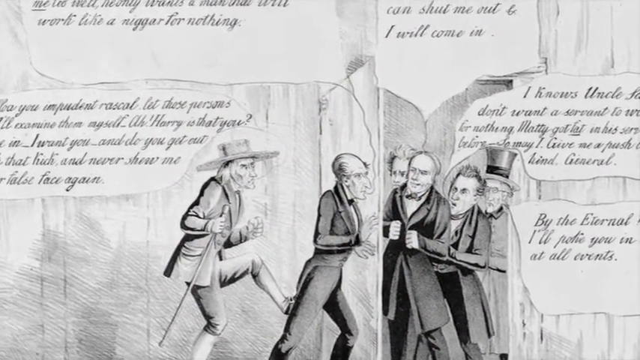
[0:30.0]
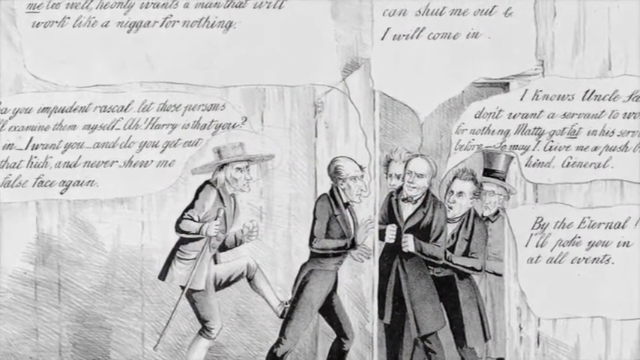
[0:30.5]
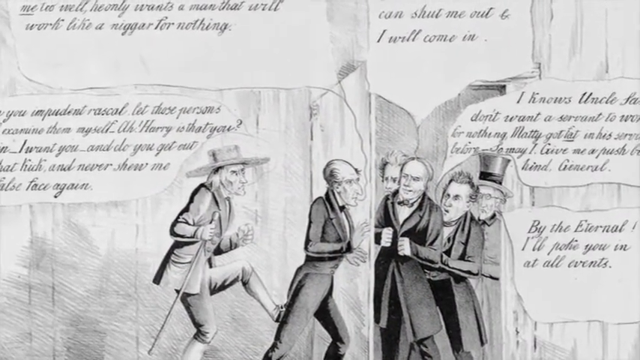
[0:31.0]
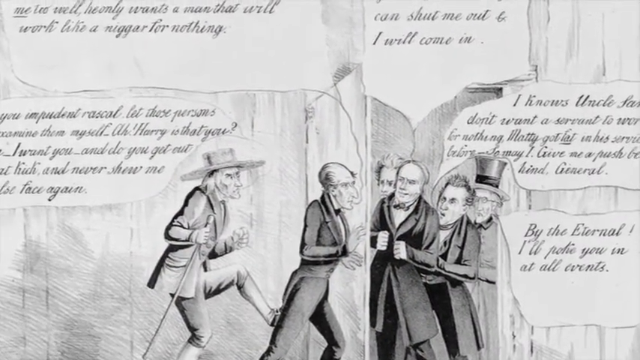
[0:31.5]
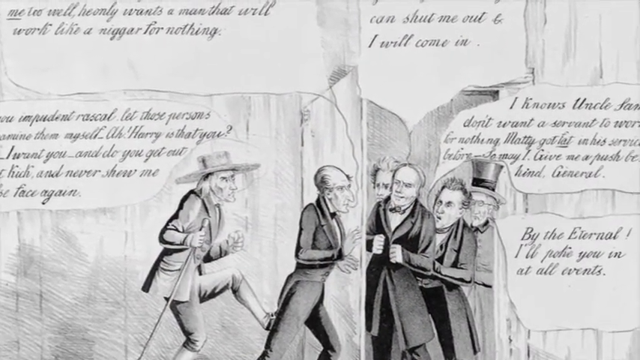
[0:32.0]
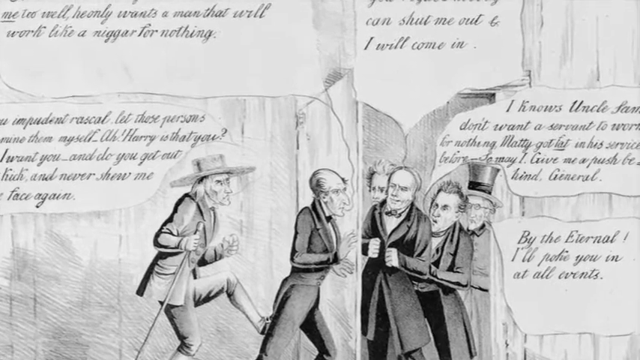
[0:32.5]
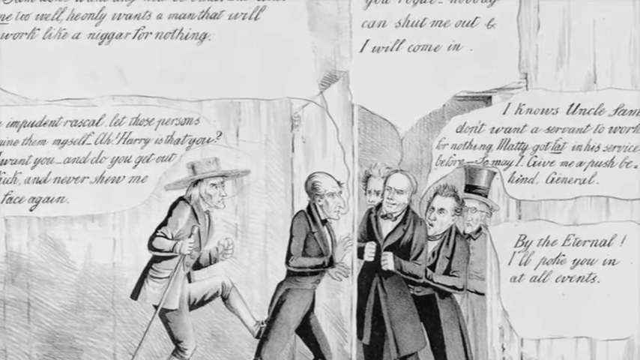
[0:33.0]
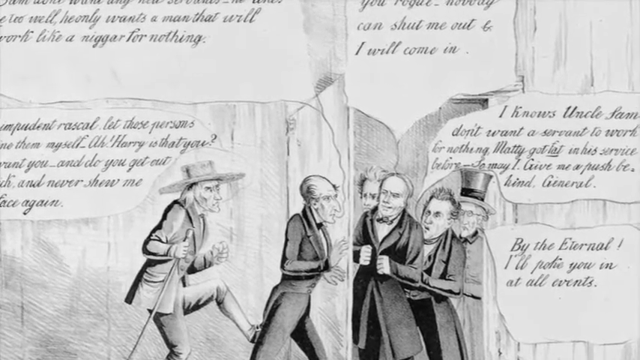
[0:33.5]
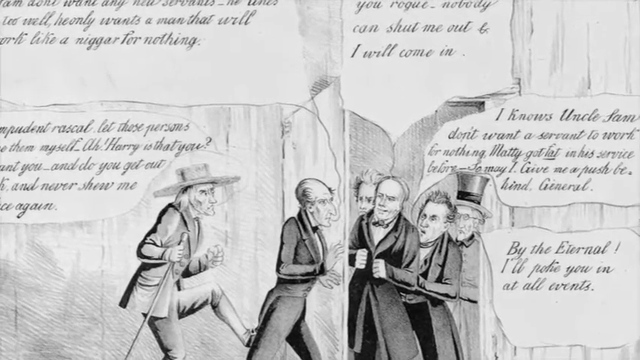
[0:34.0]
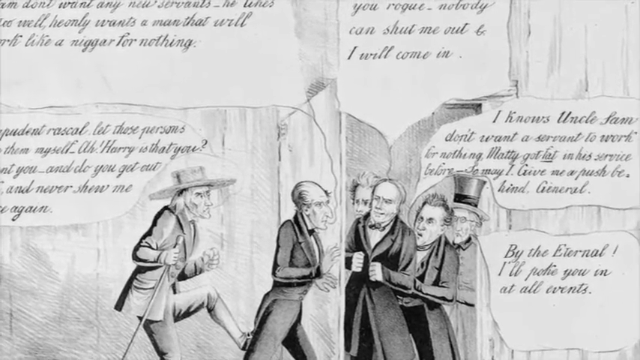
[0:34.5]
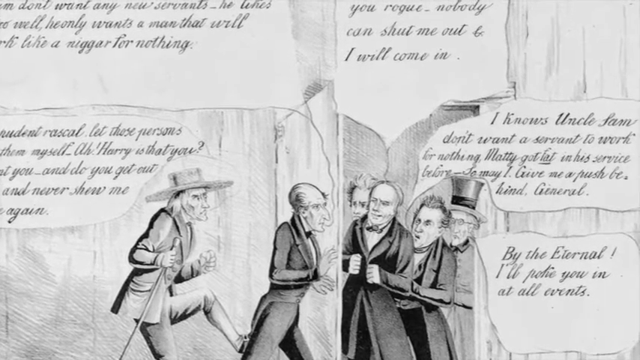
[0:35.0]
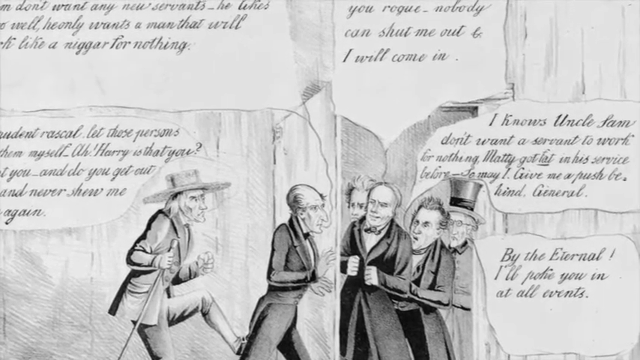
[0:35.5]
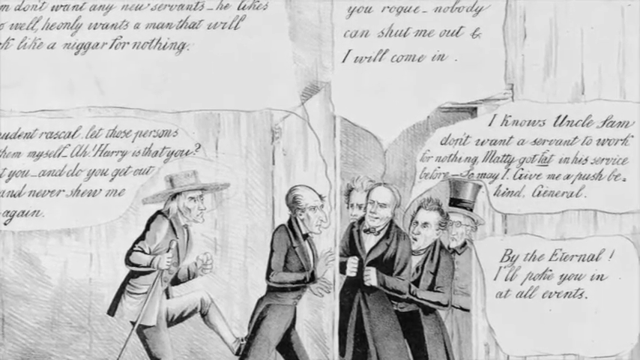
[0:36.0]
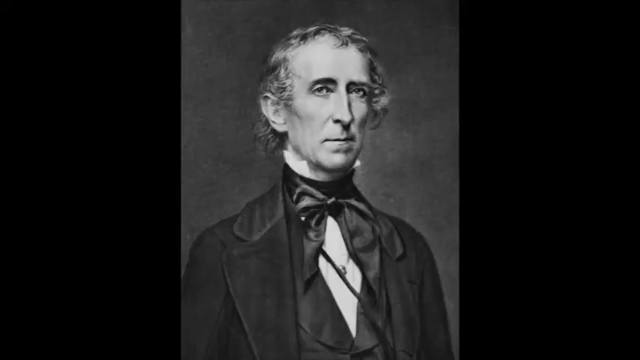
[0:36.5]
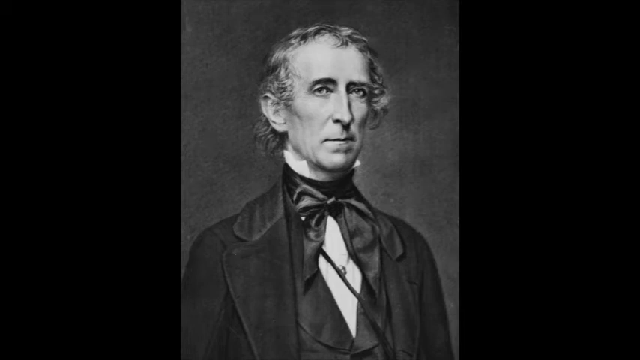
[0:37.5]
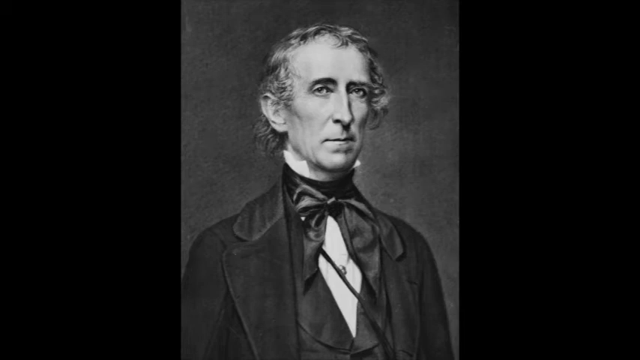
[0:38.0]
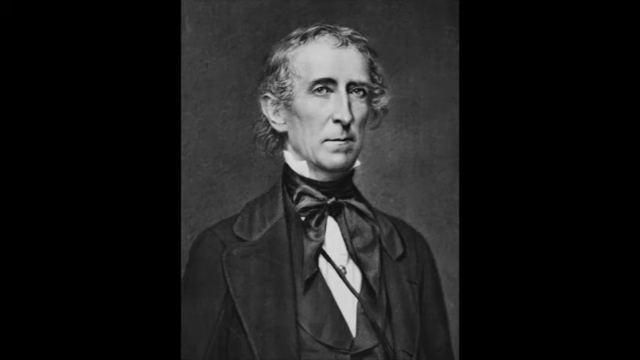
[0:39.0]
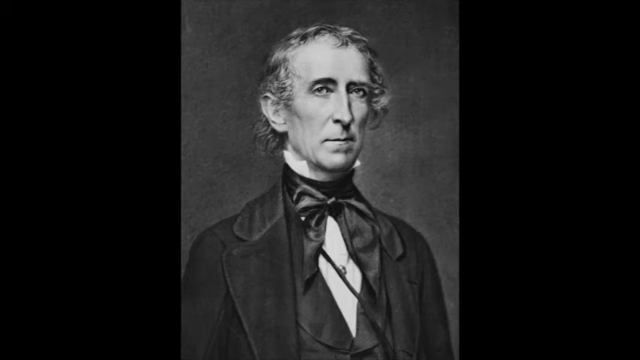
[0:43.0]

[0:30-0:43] A political cartoon appears, showing four hand-drawn black-and-white men on the right side and two hand-drawn men on the left side. Each man has a large speech bubble coming from his mouth with handwritten cursive text. The men on the right are holding a door shut, while the men on the left seem to be trying to kick the door in. The camera slowly pans upward toward one of the speech bubbles, then cuts to a black-and-white photograph of an older man wearing early 19th-century clothing.